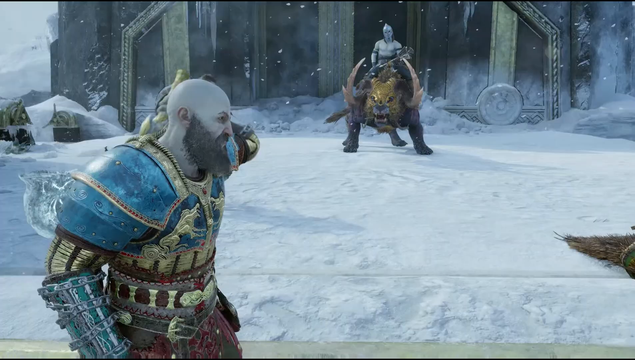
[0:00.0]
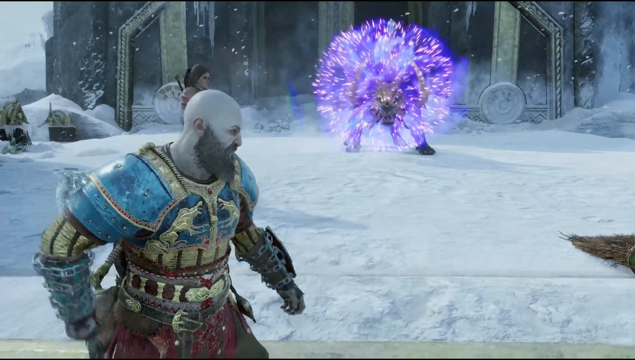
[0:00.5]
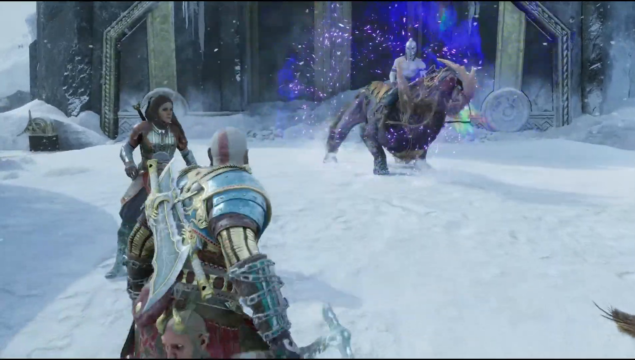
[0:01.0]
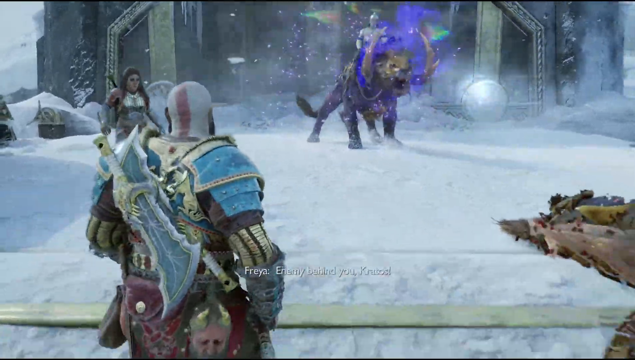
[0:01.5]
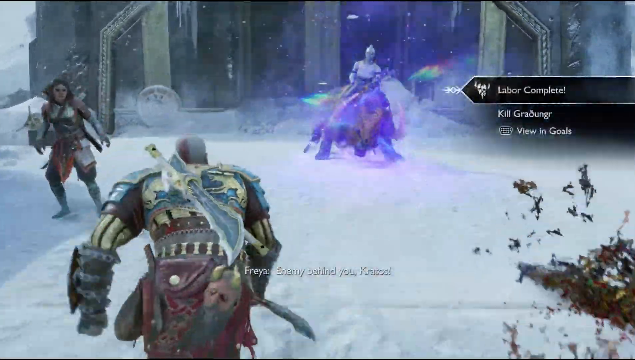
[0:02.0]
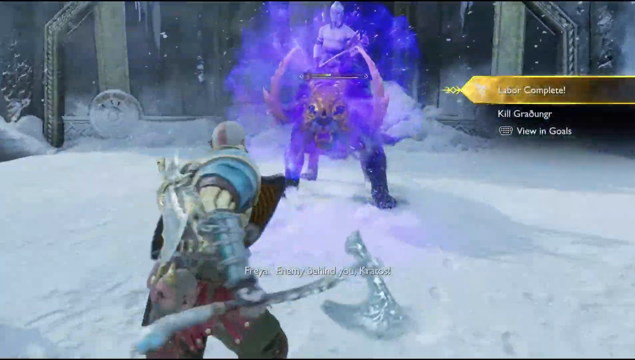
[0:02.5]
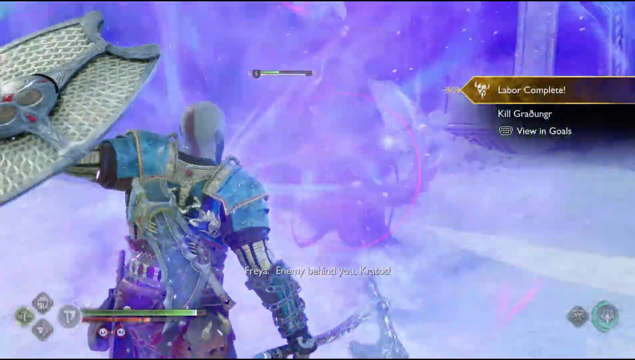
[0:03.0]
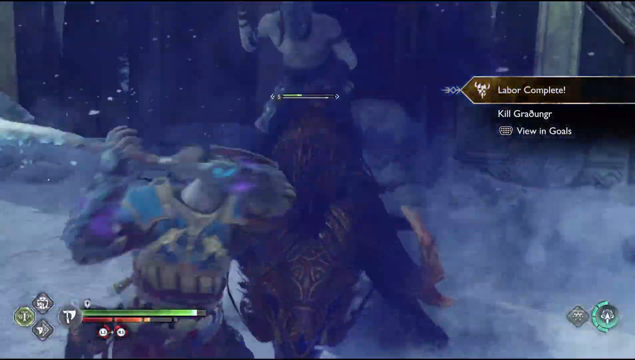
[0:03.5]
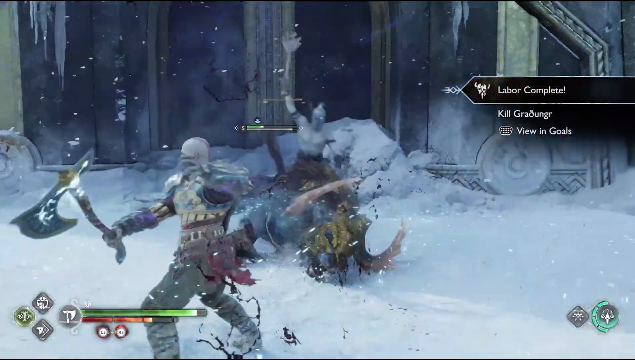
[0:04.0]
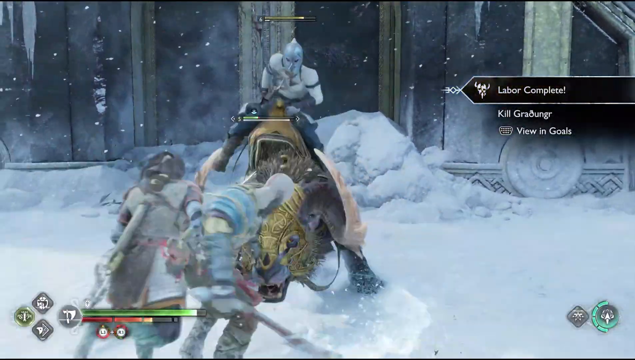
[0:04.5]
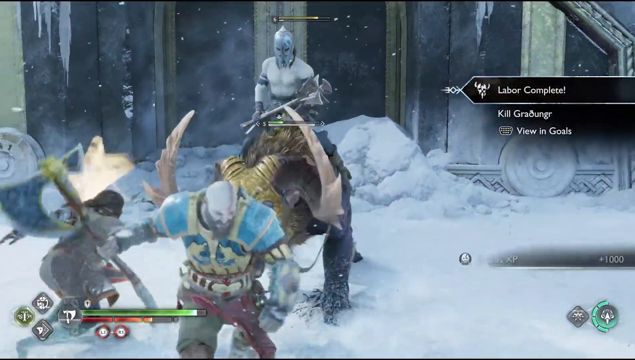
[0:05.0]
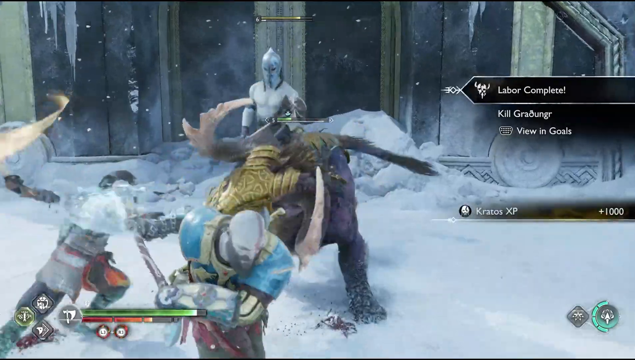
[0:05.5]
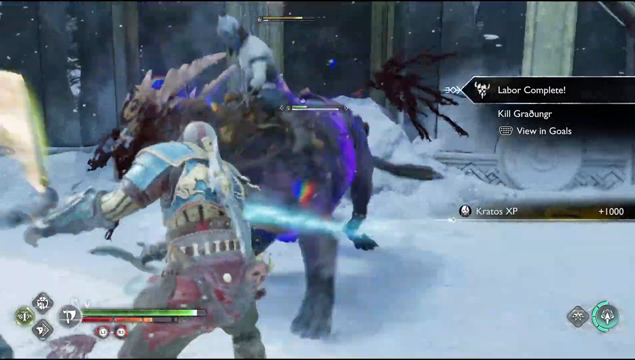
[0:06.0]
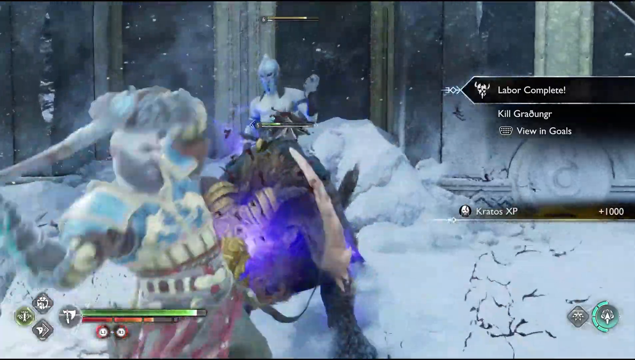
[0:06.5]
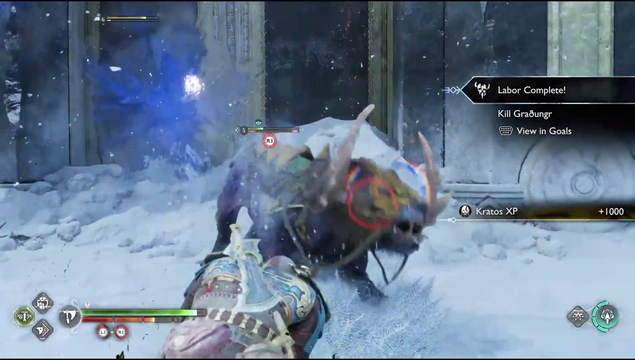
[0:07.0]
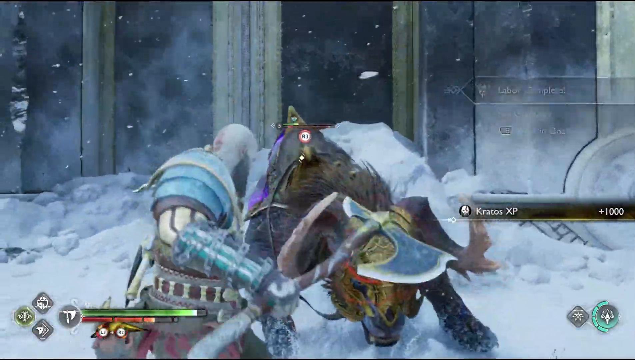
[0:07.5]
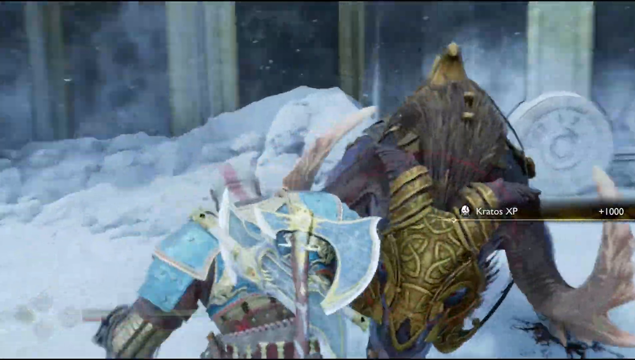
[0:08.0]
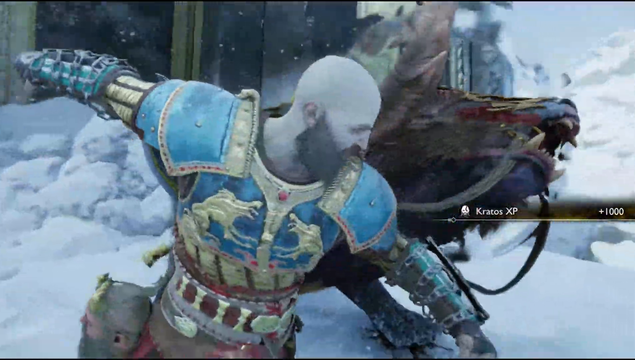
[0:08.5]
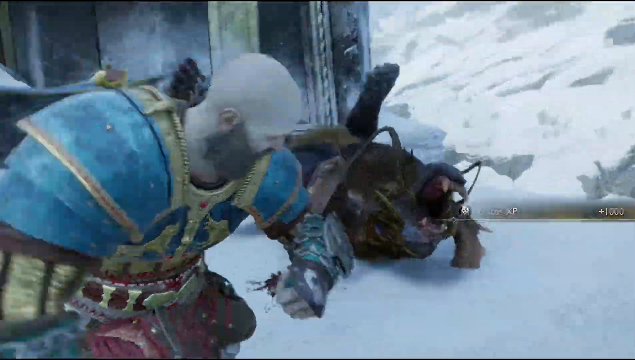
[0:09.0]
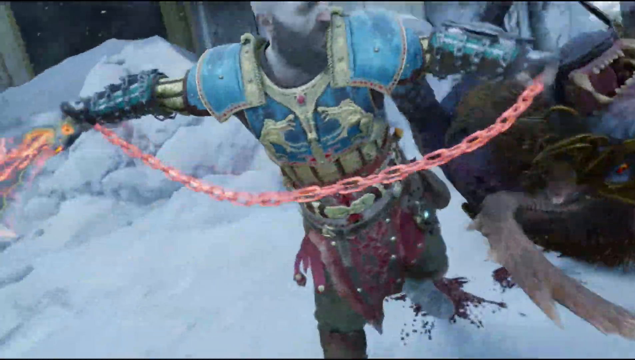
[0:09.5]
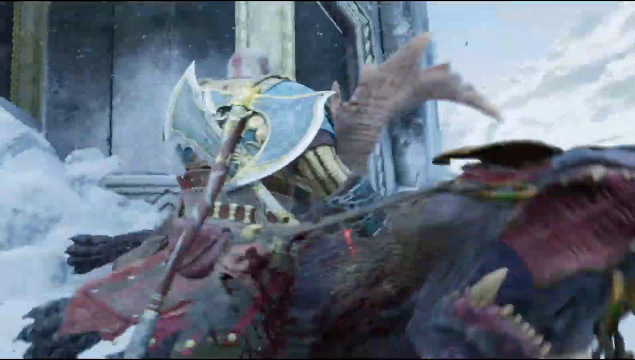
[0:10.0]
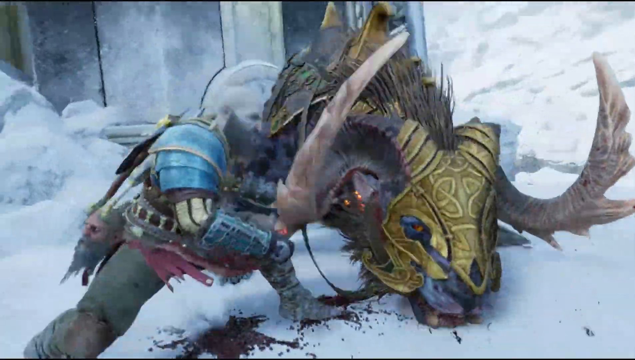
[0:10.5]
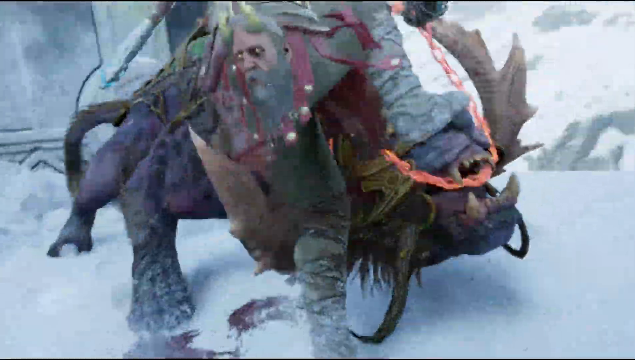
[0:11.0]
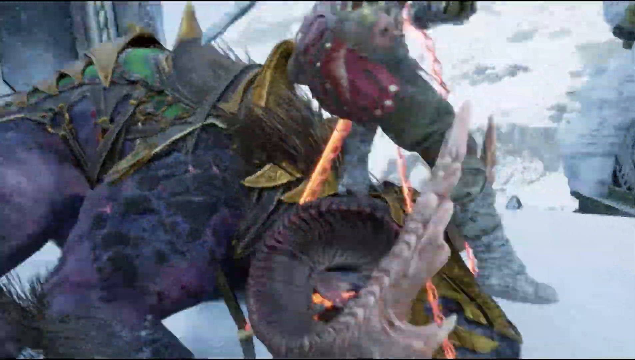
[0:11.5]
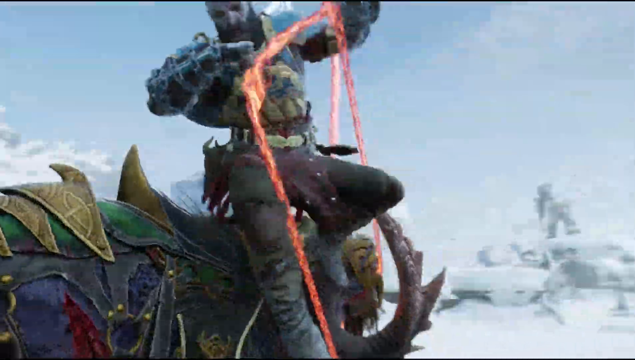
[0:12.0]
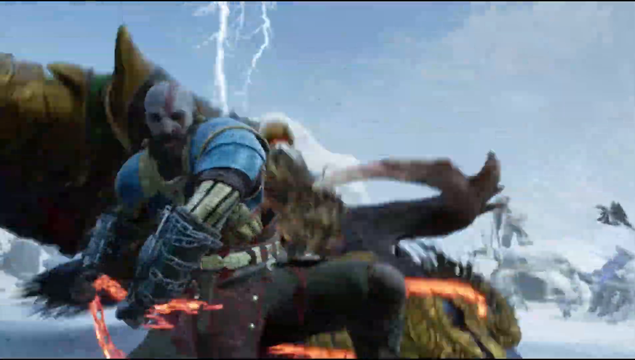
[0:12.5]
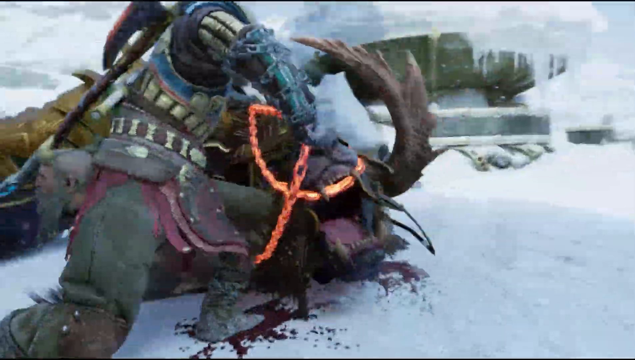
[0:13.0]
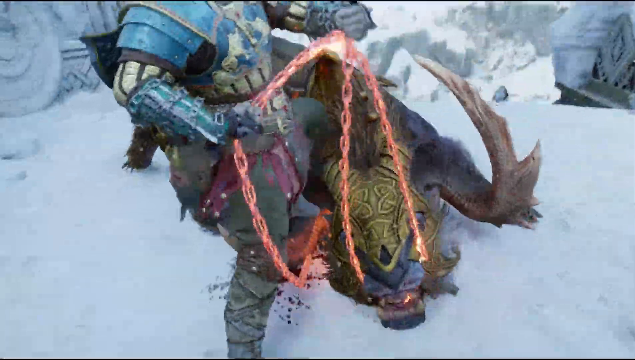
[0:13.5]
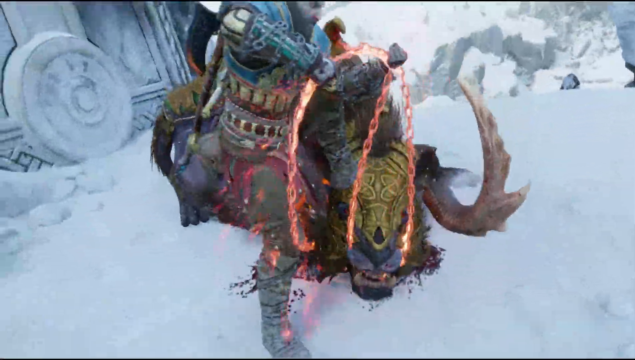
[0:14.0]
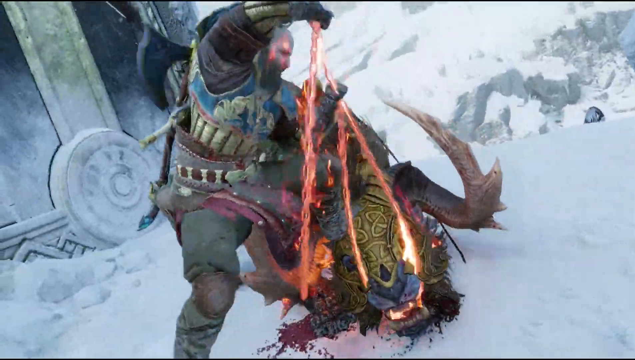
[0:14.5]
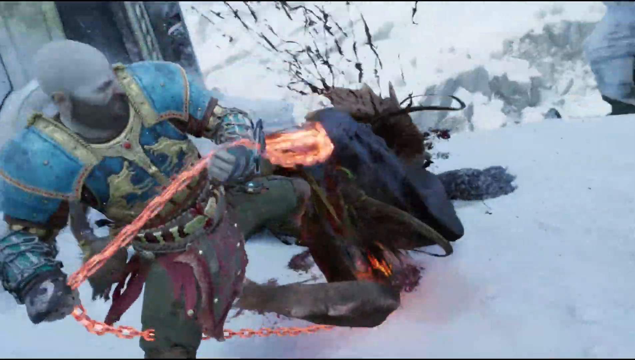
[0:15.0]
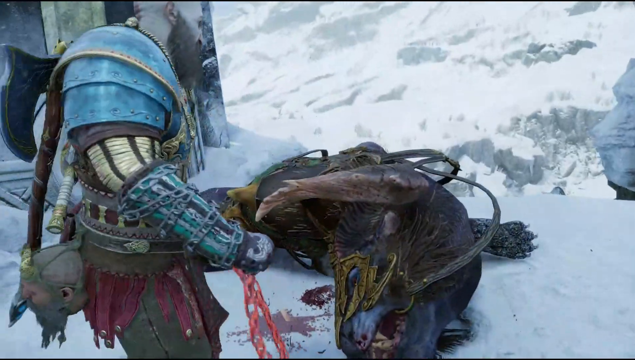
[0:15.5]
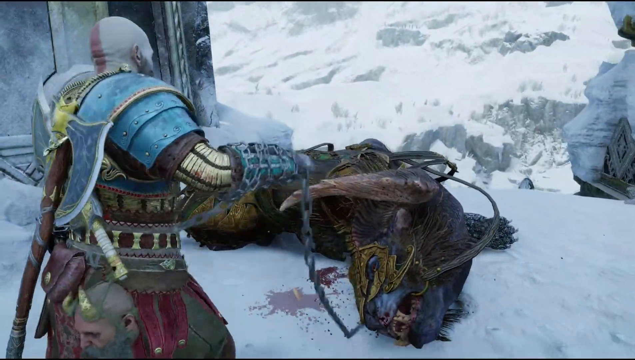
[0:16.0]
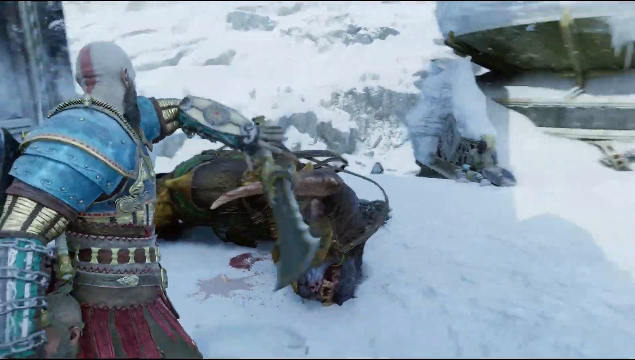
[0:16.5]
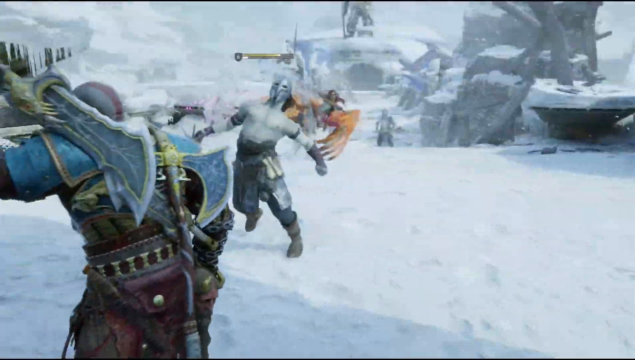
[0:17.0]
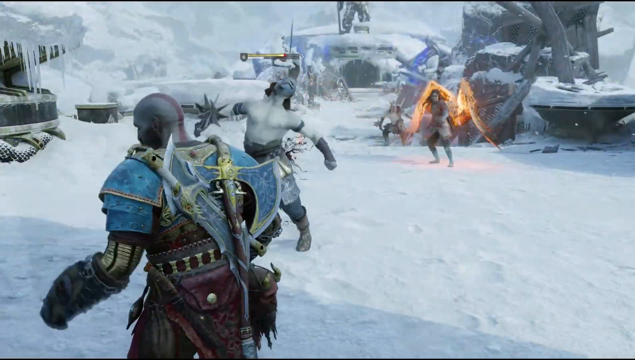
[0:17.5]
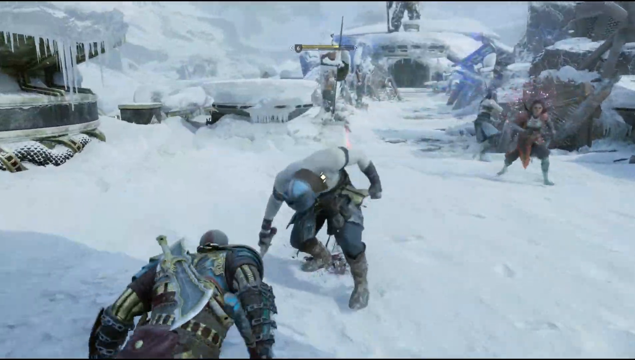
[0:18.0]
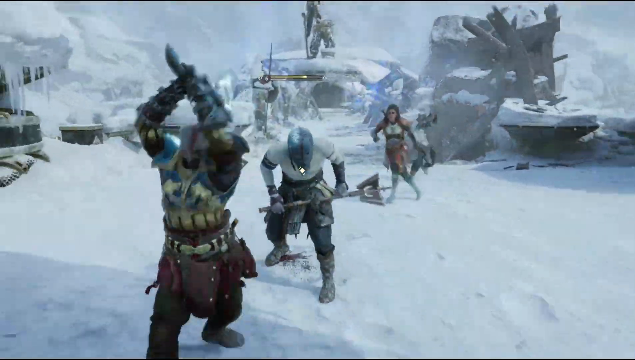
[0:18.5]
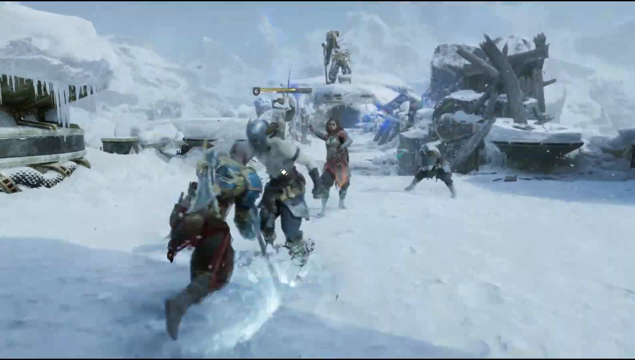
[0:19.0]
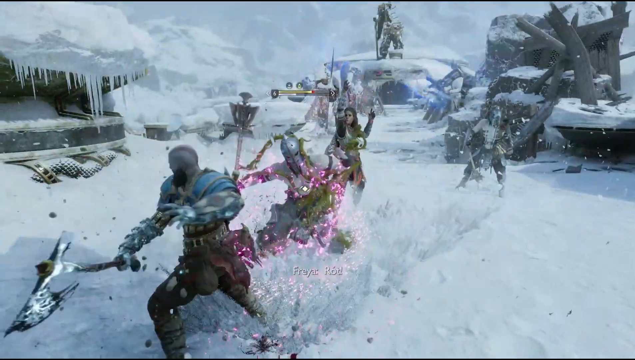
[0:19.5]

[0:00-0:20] A fight takes place out in the snow. A large tiger, which might also have wings, seems to change into a seal or a buffalo; it changes shape multiple times. A bald man with a long beard and a mustache, probably the main character, is trying to win against the creature and the character that is on it. Words pop up on the screen at different times, and it looks like lightning comes down. The man wins, and the creature falls down. Words on the right-hand side of the screen include "labor complete" and "kill". The visuals look realistic: the man looks very real, and the creature looks real as well, though it also looks fake.